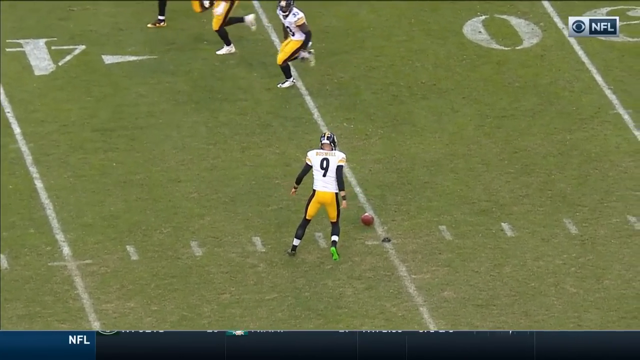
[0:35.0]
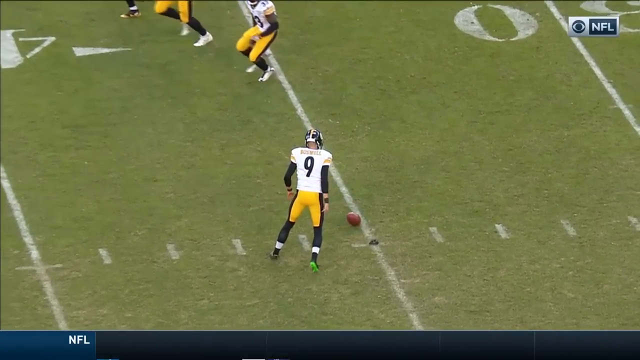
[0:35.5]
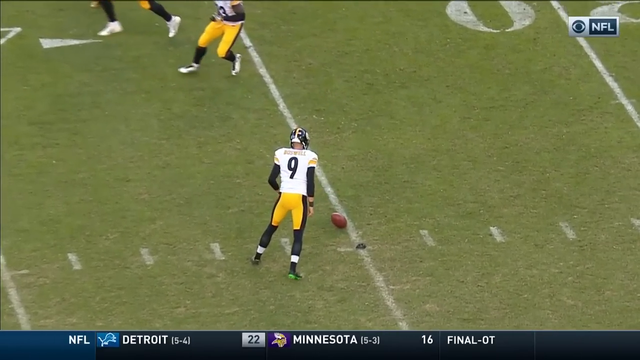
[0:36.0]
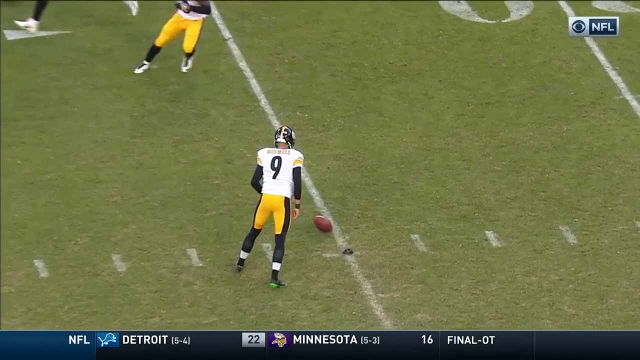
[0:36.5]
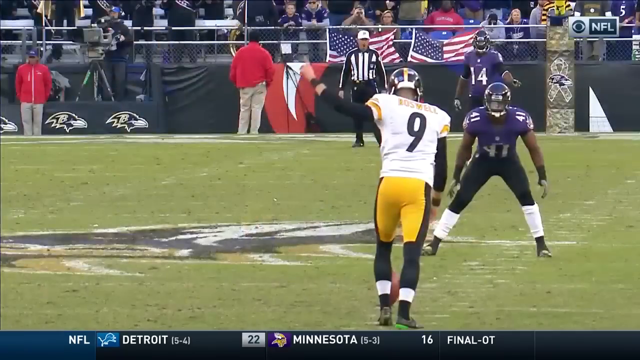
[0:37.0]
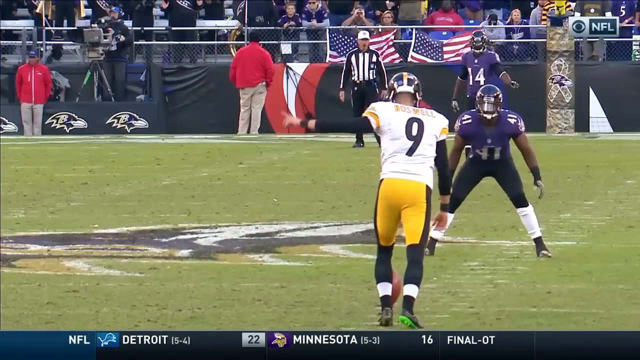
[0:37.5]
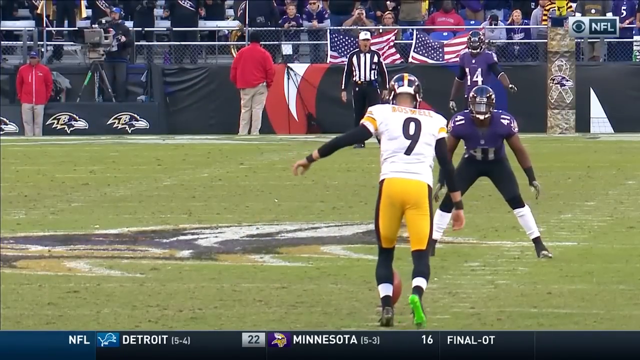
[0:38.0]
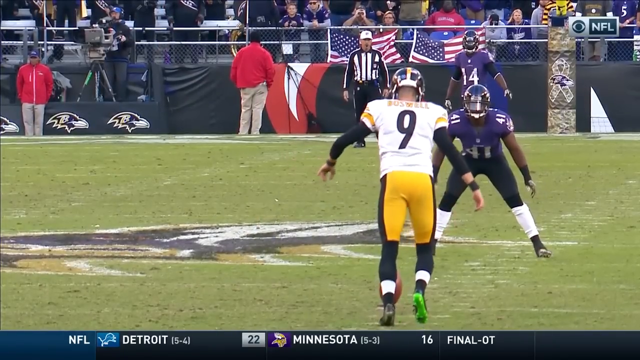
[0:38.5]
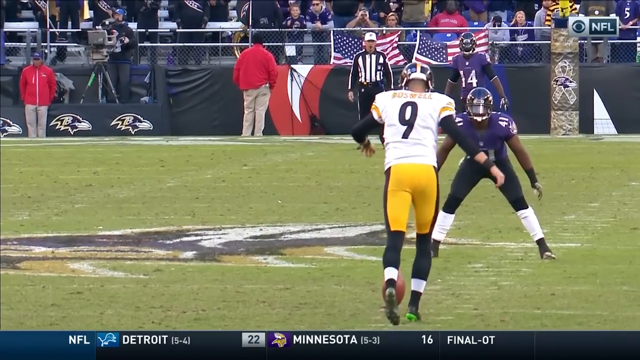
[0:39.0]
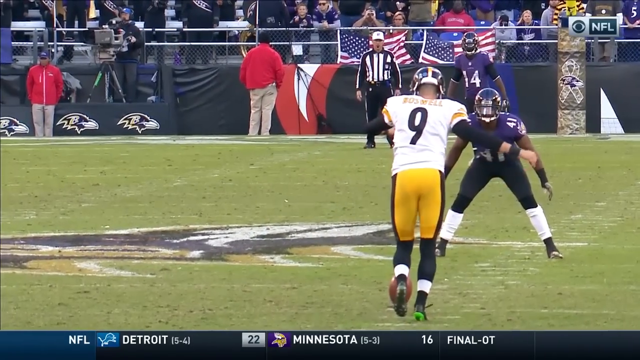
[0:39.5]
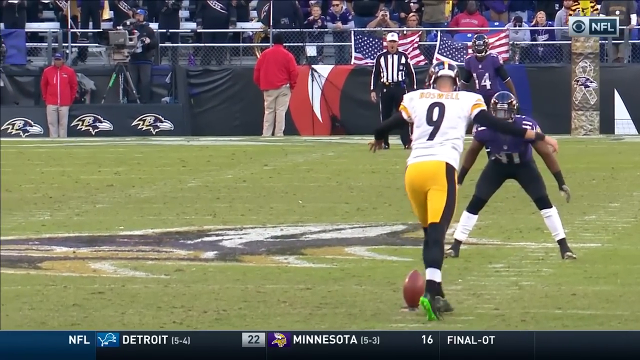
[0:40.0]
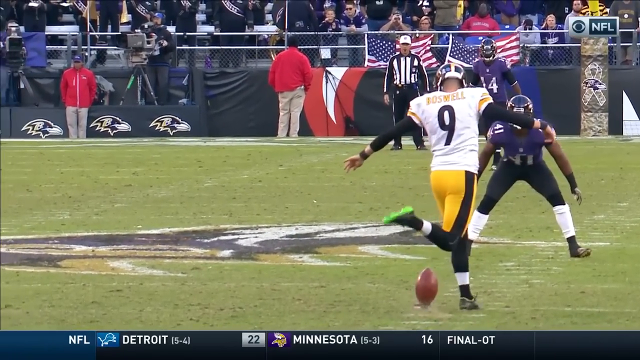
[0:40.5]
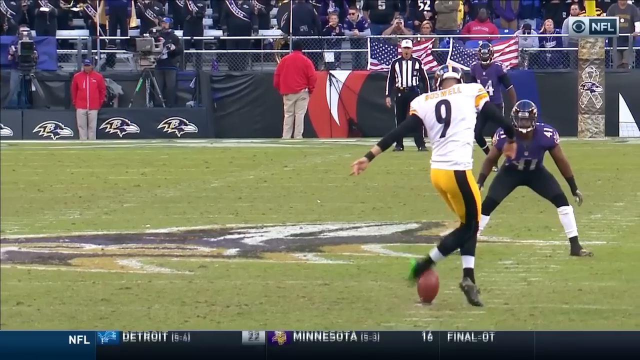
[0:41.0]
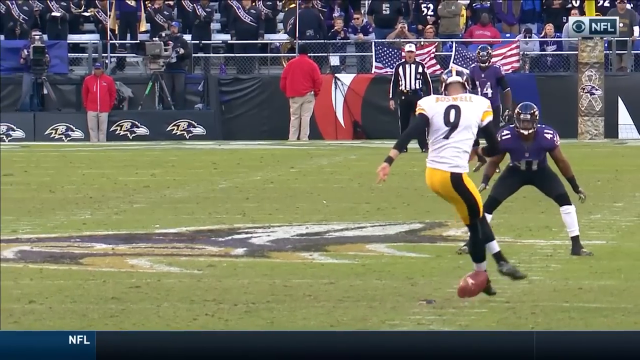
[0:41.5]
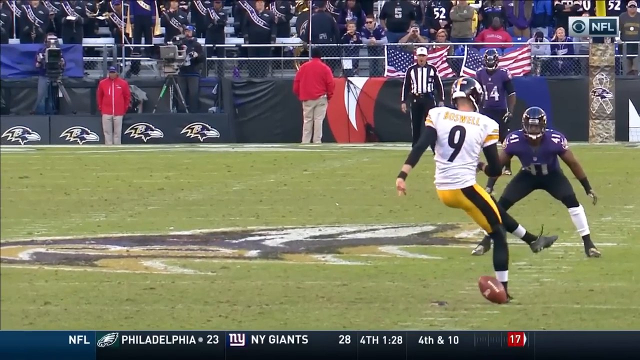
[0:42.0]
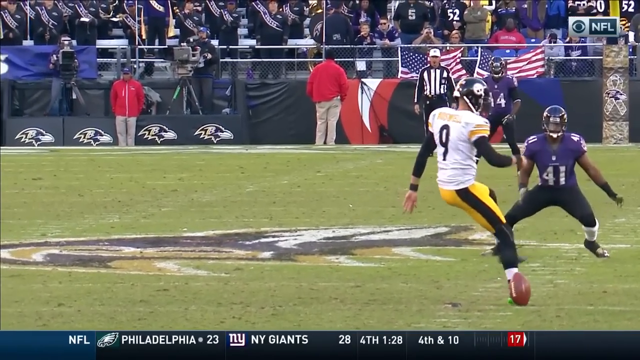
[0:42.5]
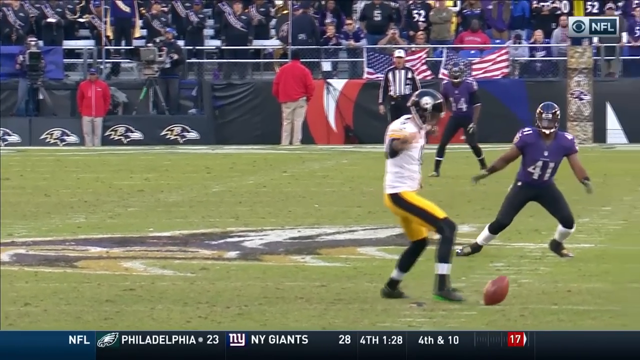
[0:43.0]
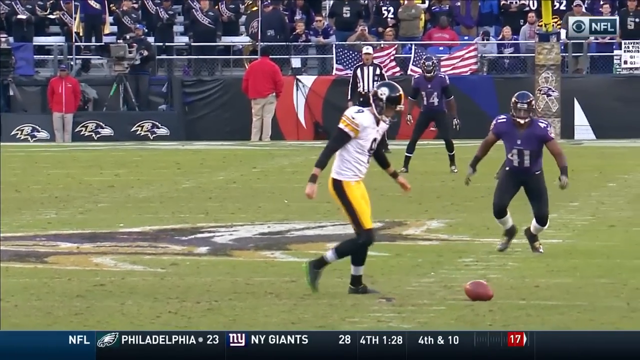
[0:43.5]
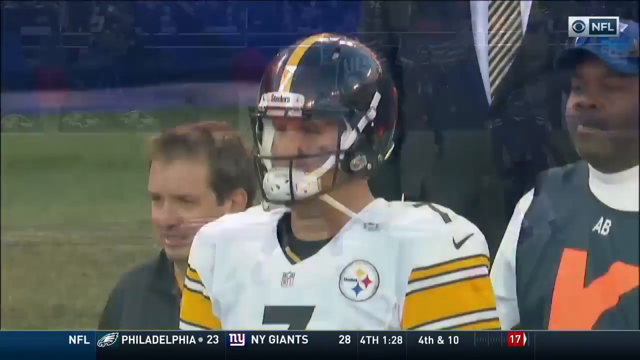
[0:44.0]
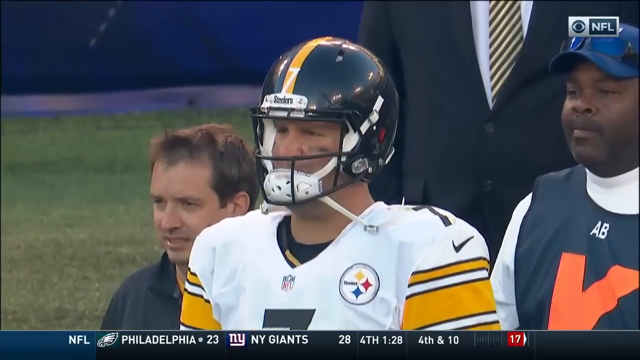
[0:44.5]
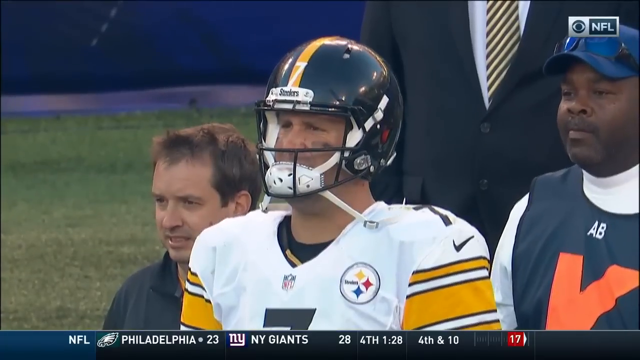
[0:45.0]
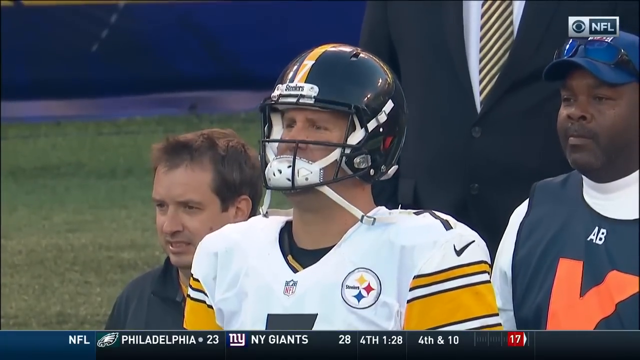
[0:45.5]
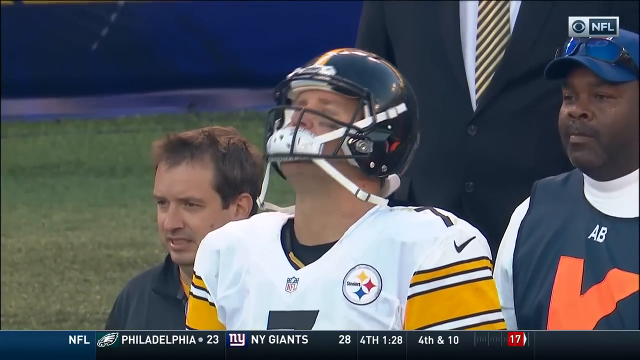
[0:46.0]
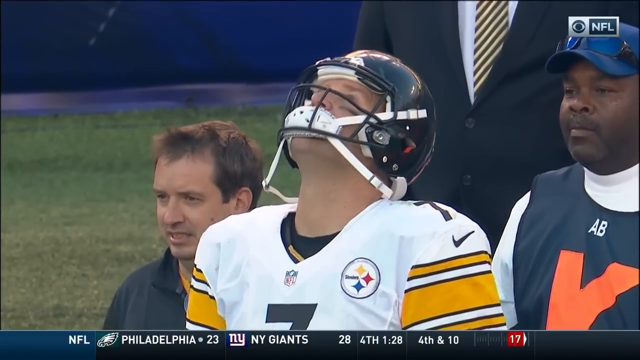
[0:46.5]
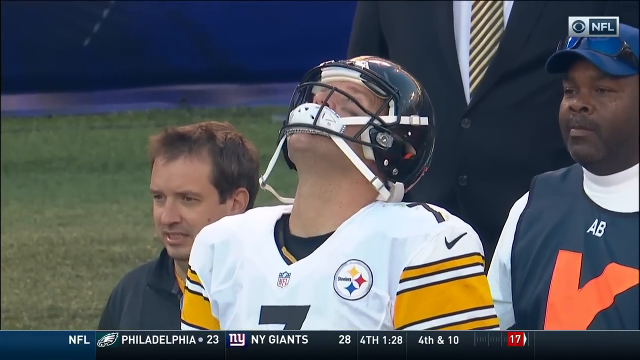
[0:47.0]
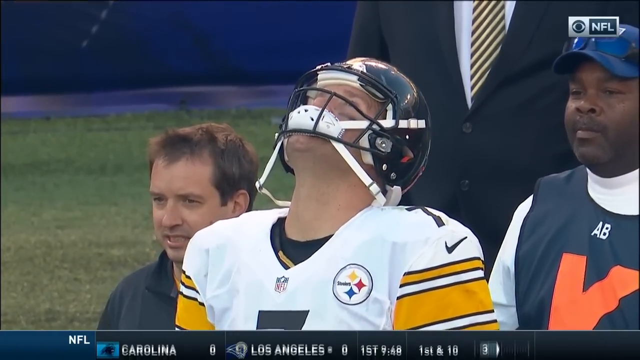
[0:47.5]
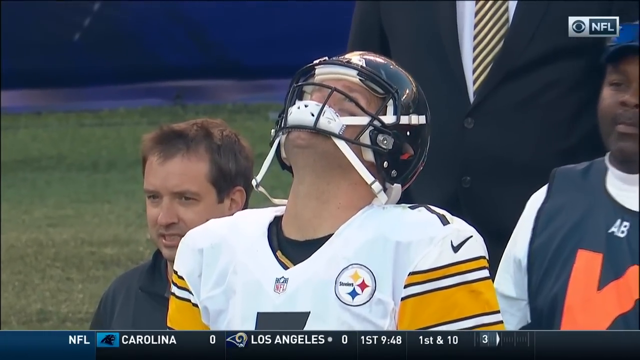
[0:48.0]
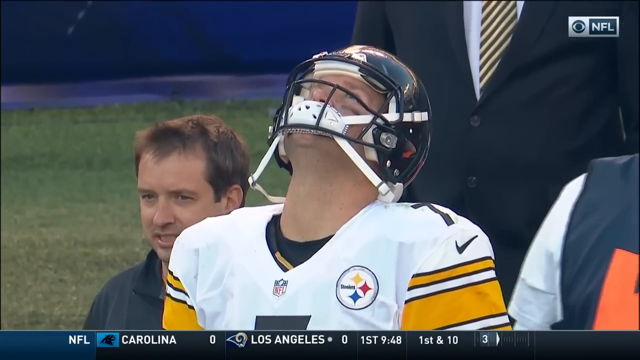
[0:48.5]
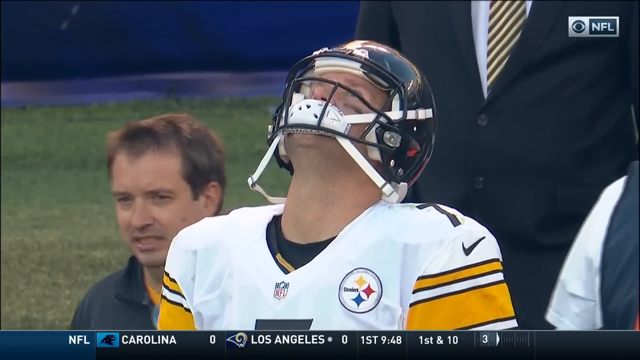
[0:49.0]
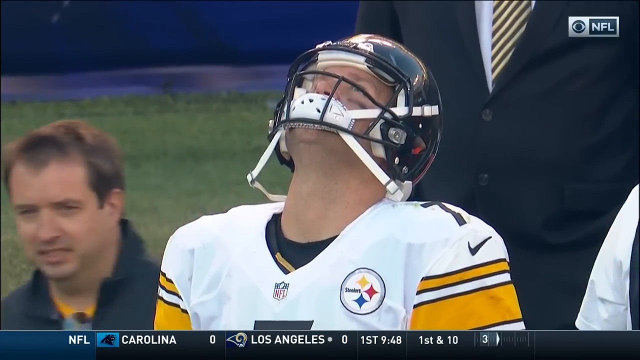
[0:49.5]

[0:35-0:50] Another slow-motion replay shows the kick. The kicker runs up to the ball and swings his right leg behind his left leg, so it looks like he is going to kick with his left leg. His right foot comes around the back of his left leg to kick the ball, but instead it kicks the ball into the outside of his left foot. The ball lies there dead before he runs up to it and kicks it again down the field. Ben Roethlisberger is then shown on the sideline with his helmet half on and the chin strap across his mouth; he puts his head back, looking frustrated.